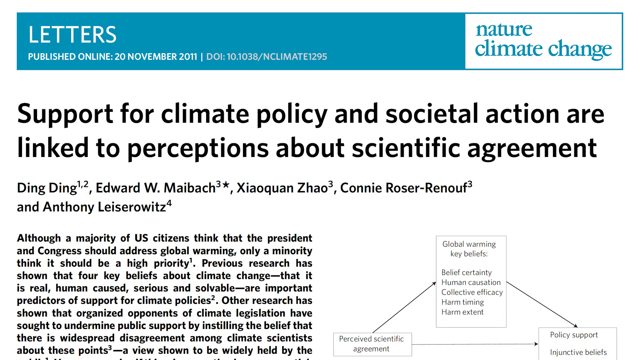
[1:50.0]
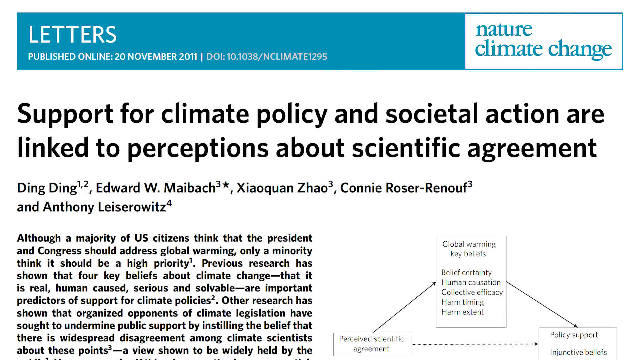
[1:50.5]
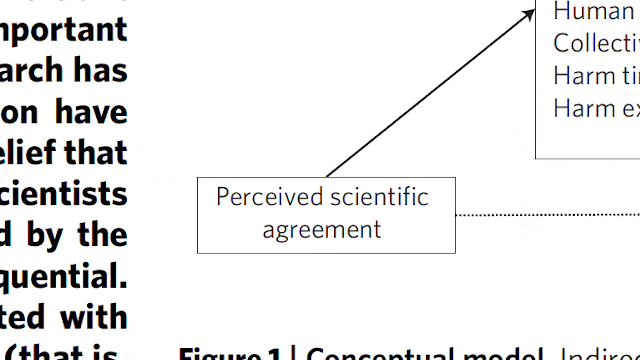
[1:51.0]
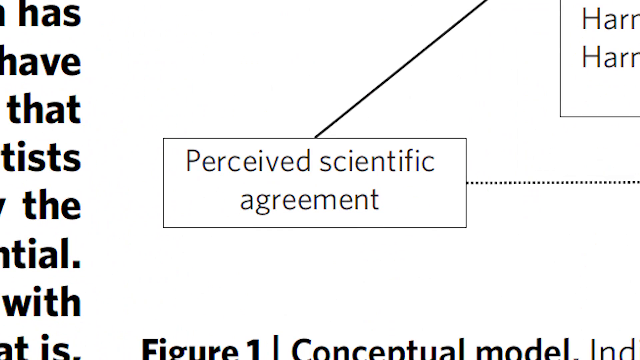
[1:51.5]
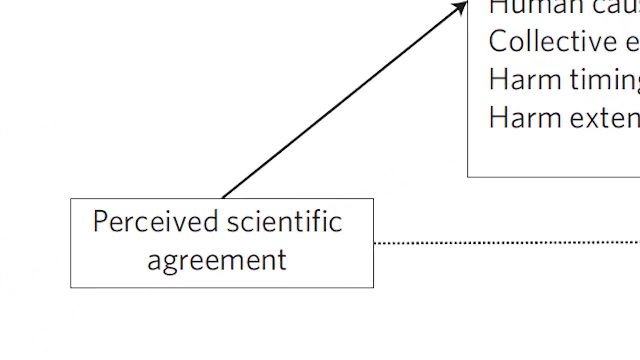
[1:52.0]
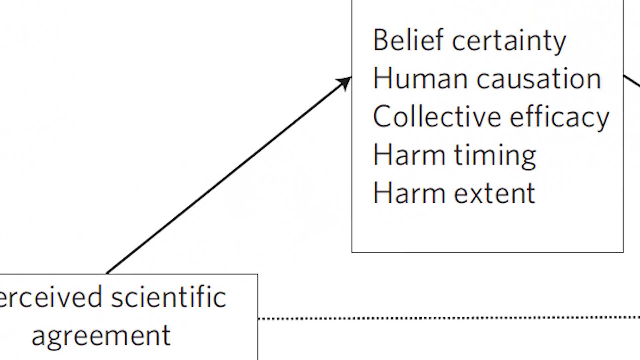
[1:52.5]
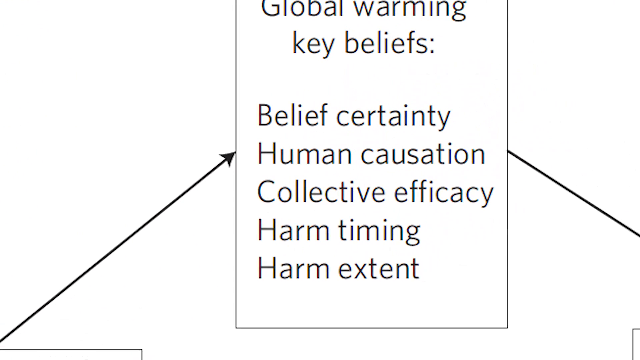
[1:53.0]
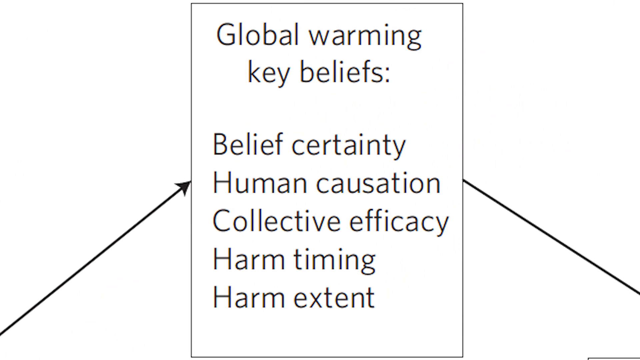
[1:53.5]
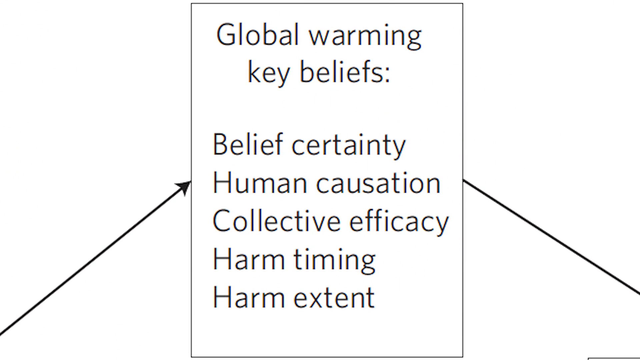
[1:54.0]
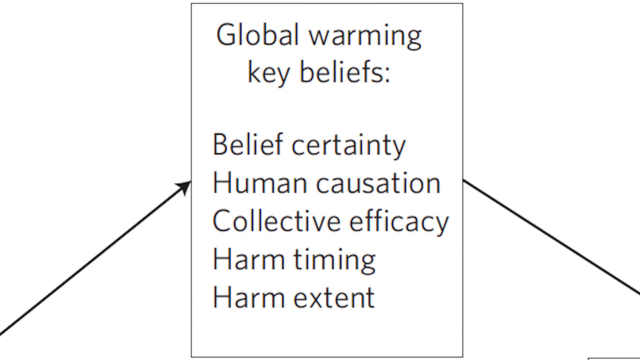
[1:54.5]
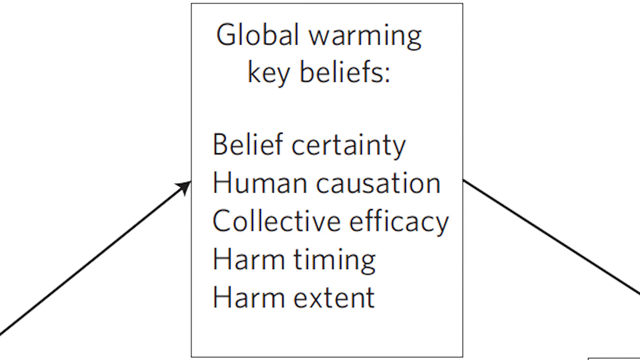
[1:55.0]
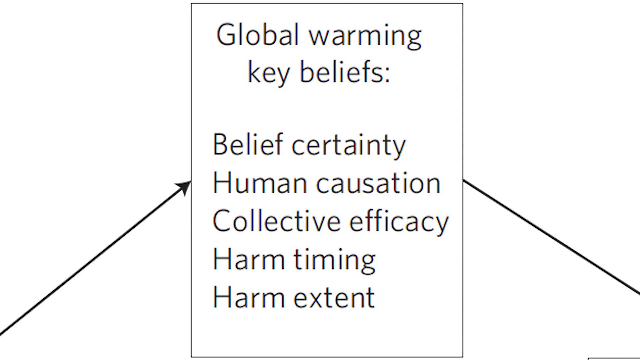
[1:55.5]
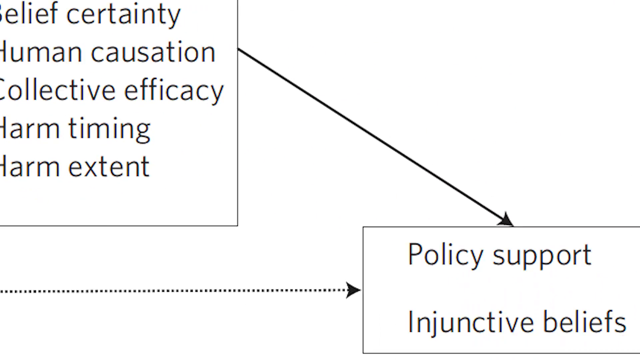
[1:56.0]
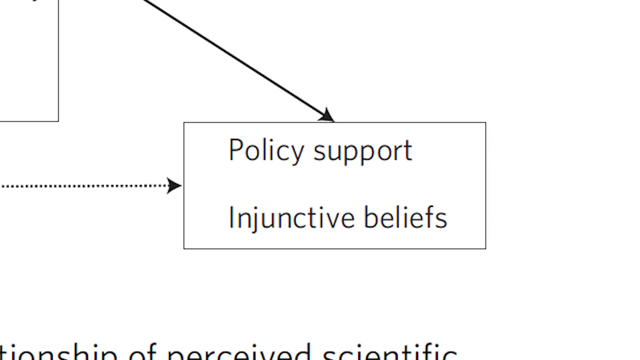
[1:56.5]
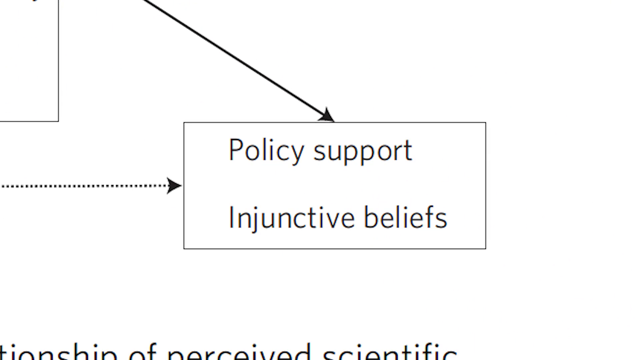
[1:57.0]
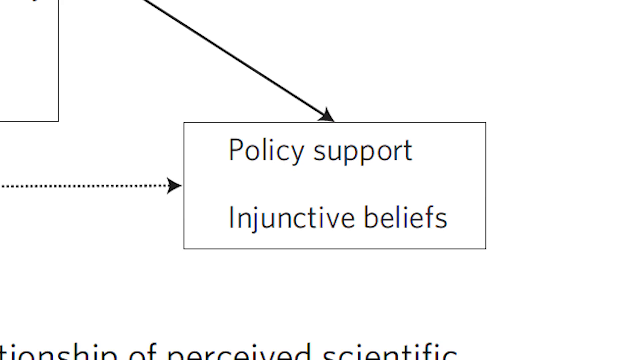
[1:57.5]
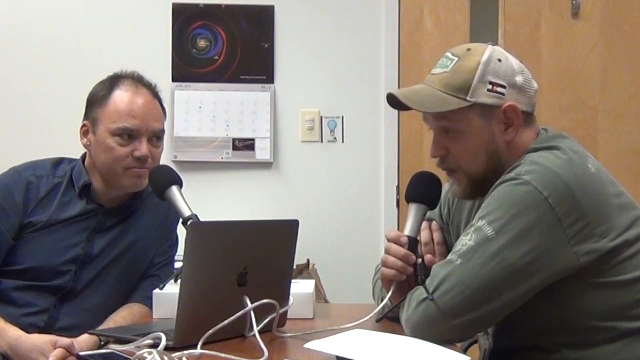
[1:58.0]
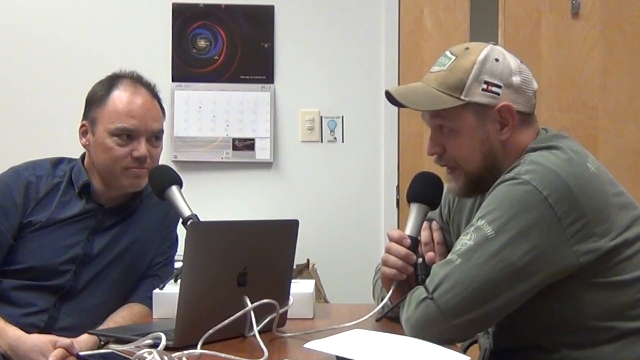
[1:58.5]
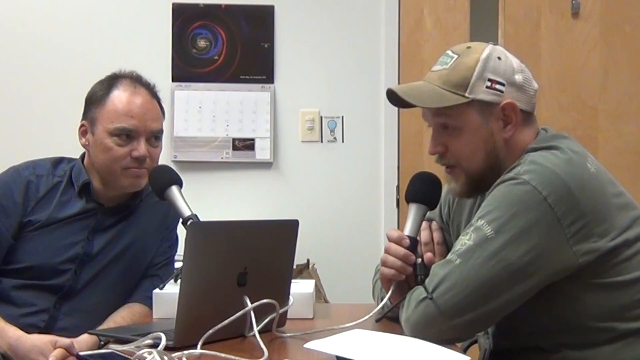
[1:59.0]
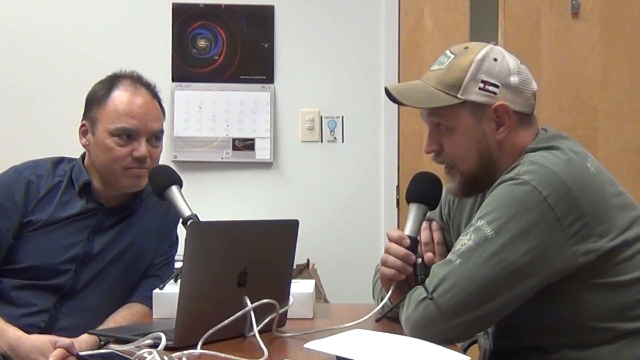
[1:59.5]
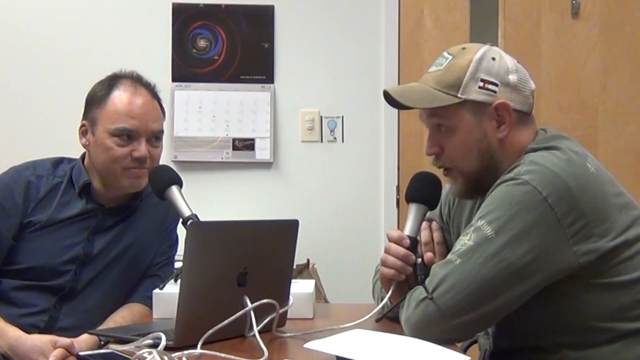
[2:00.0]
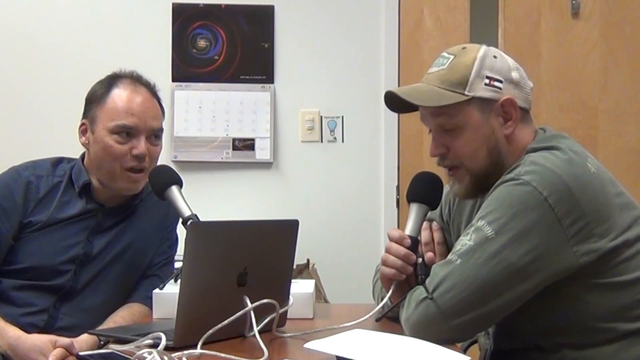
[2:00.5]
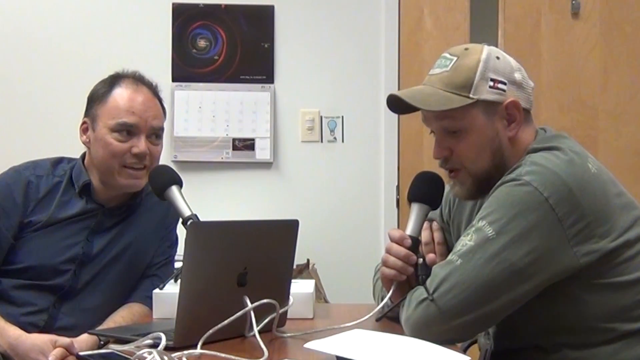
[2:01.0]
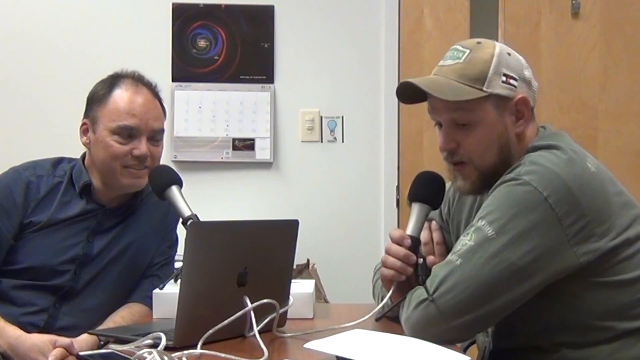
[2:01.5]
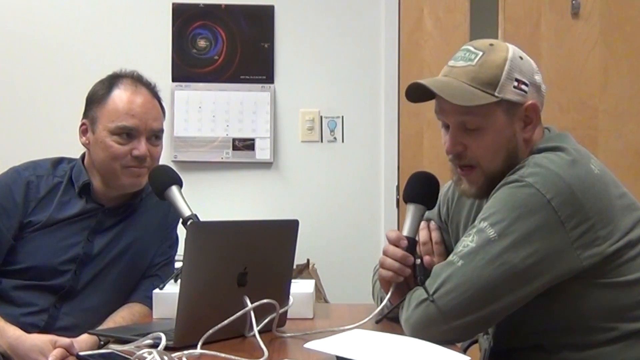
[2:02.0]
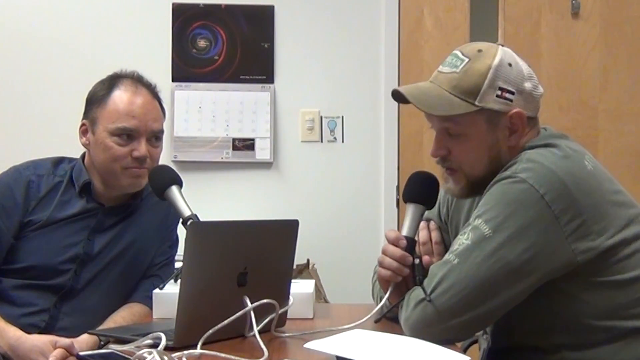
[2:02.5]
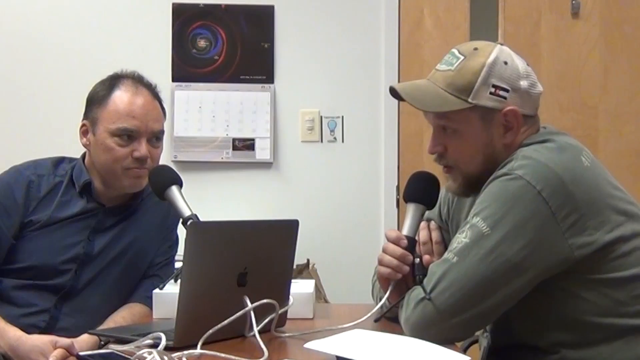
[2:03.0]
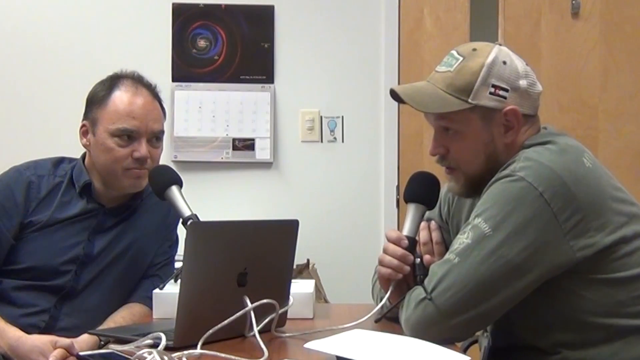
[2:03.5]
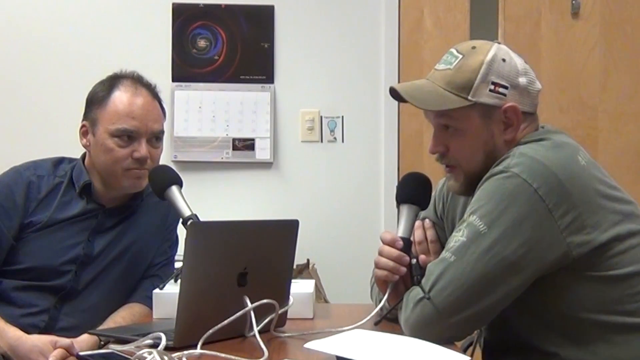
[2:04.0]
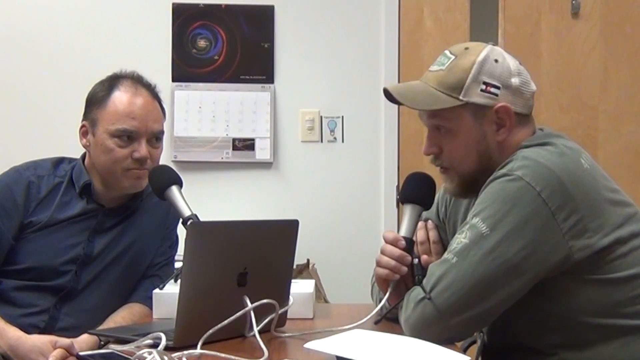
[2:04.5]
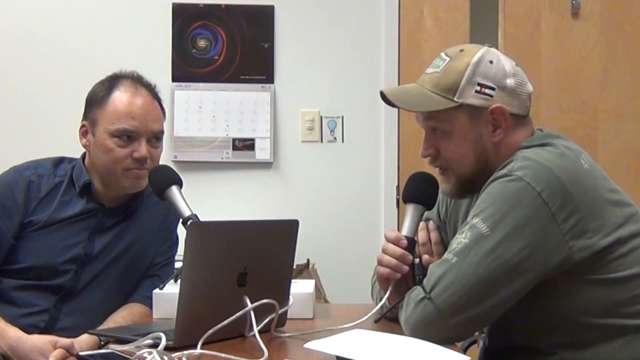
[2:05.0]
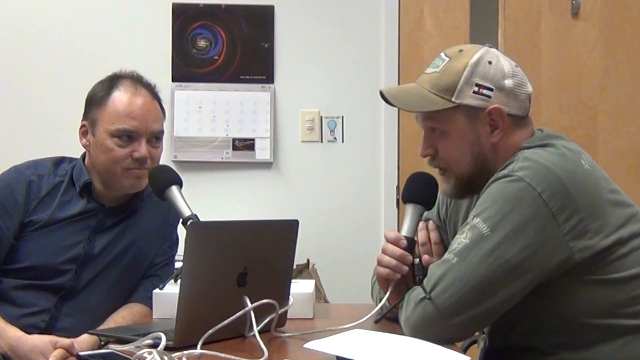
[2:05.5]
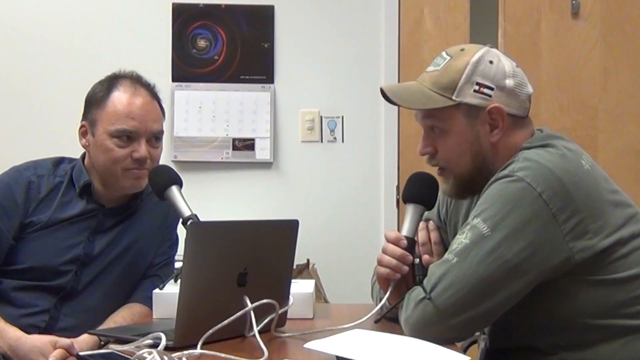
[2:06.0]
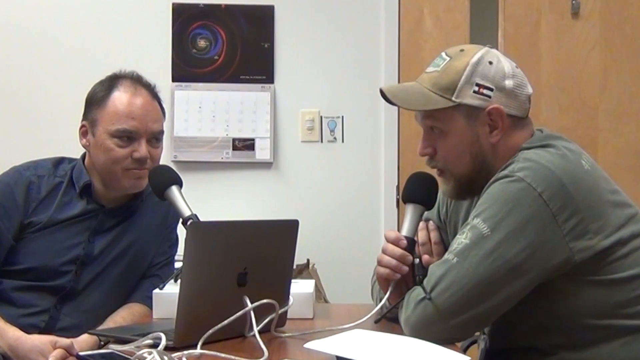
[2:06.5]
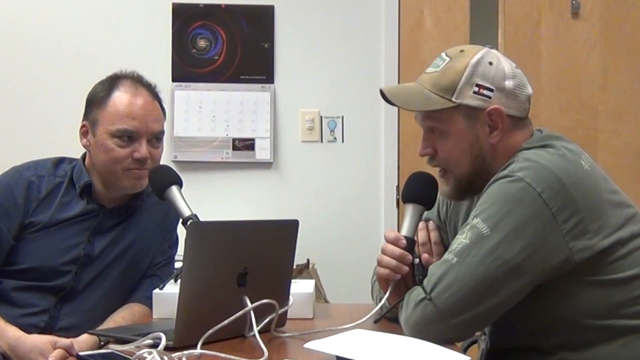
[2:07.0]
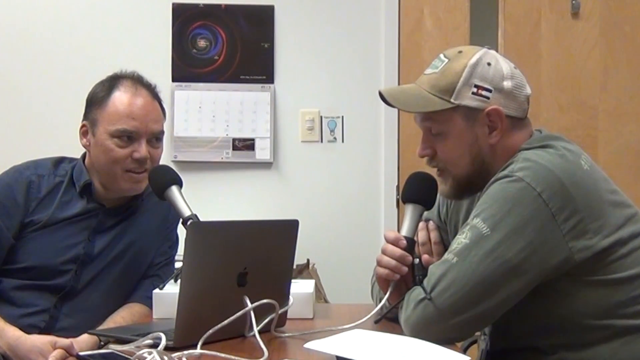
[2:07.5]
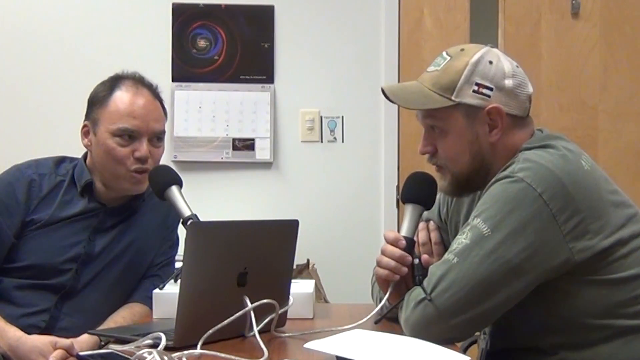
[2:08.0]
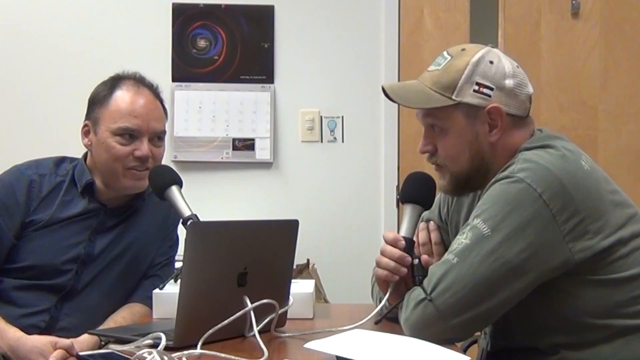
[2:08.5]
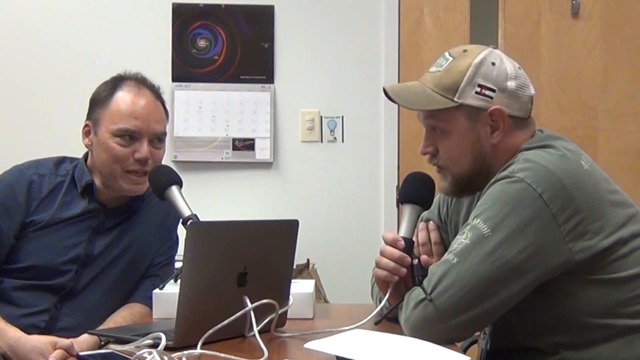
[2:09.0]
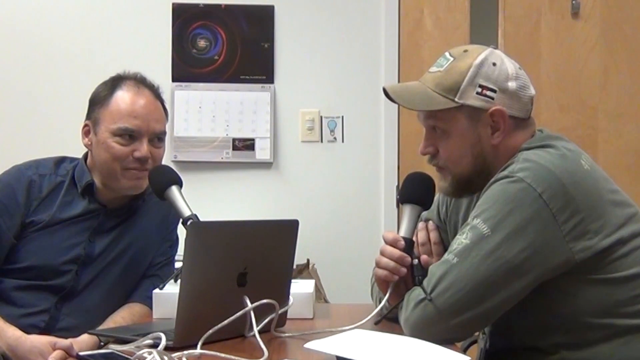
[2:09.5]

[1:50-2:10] Text from Nature Climate Change Letters, published online November 20th, 2011, is shown. The headline reads "support for climate policy and societal action are linked to perceptions about scientific agreement". Part of the text reads: "although a majority of U.S. citizens think the president and Congress should address global warming, only a minority think it should be a high priority. Previous research has shown that four key beliefs about climate change, that it is real, human caused, serious and solvable, are important predictors of support for climate policies. Other research has shown that organized opponents of climate legislation have sought to undermine public support by instilling the belief that there is widespread disagreement among the scientists."